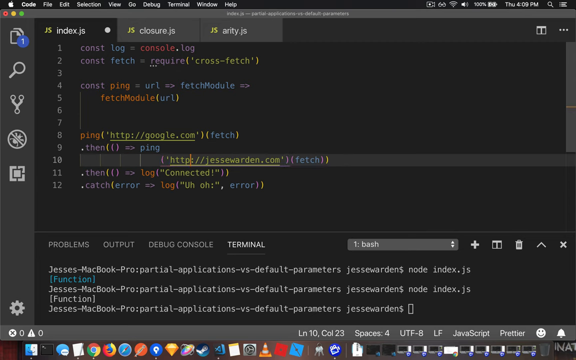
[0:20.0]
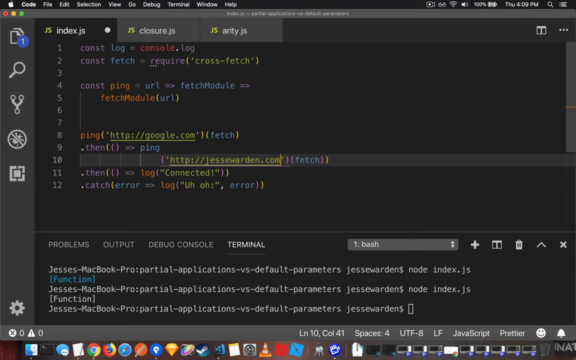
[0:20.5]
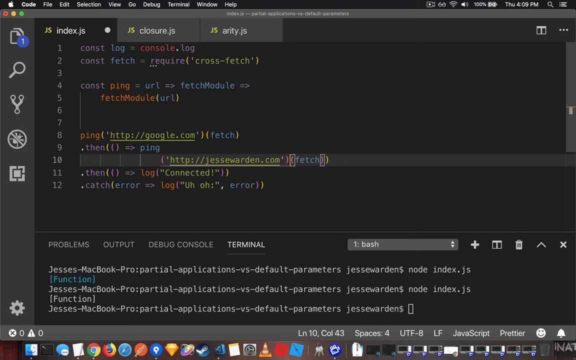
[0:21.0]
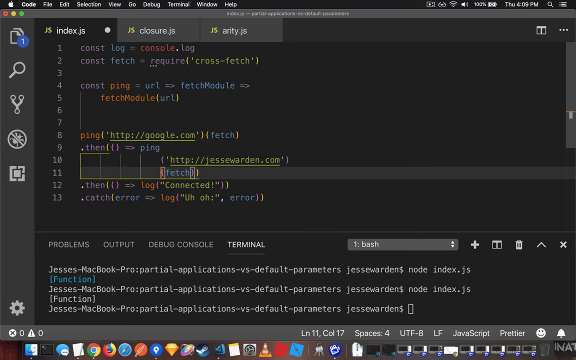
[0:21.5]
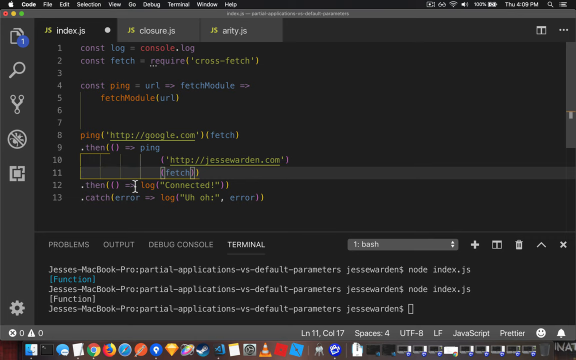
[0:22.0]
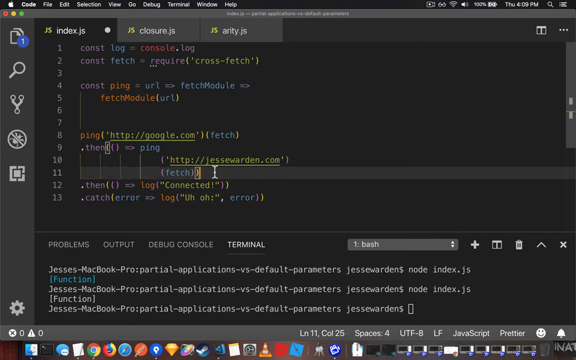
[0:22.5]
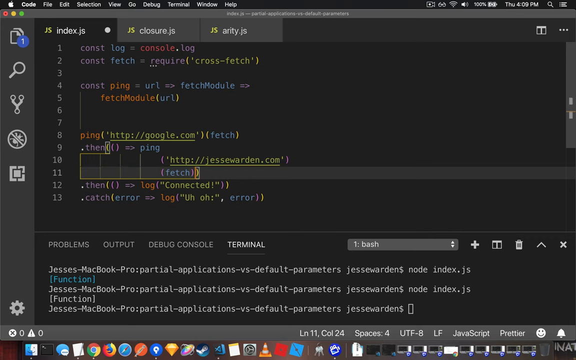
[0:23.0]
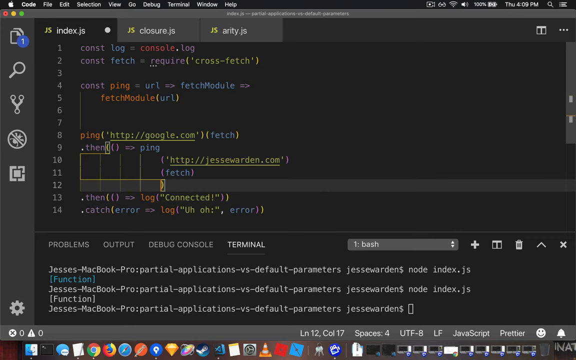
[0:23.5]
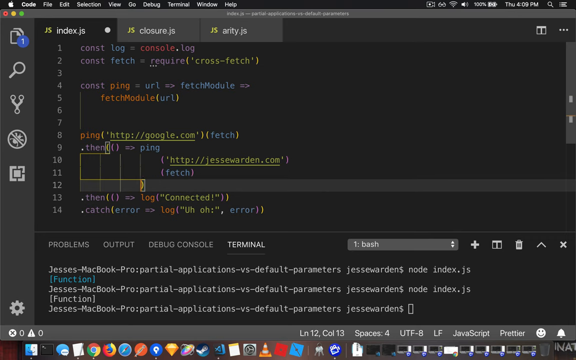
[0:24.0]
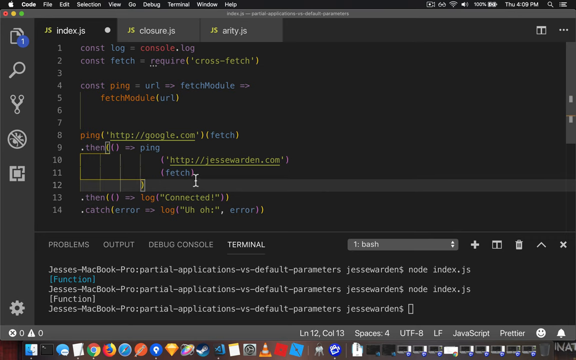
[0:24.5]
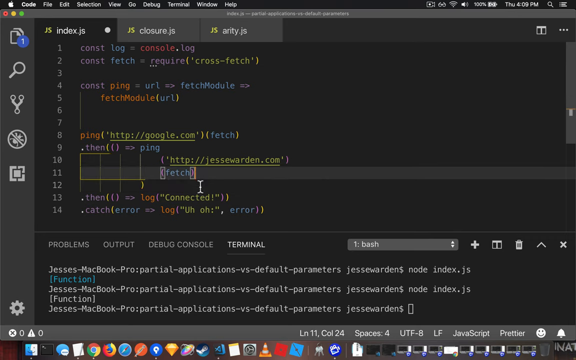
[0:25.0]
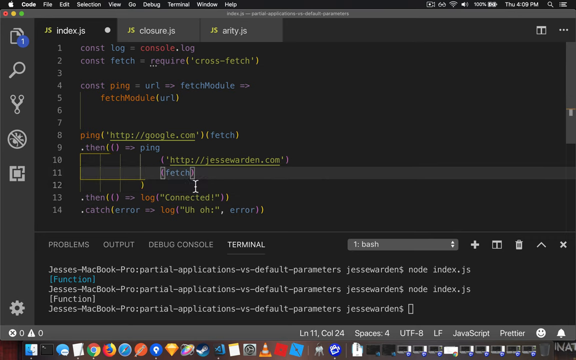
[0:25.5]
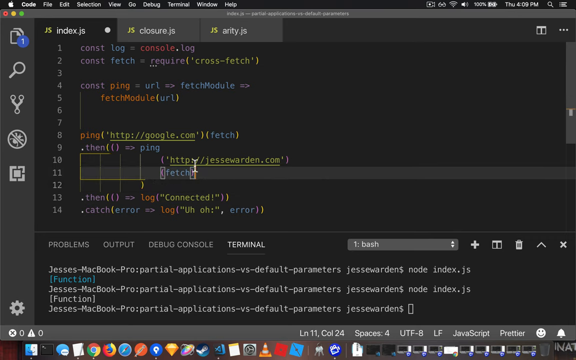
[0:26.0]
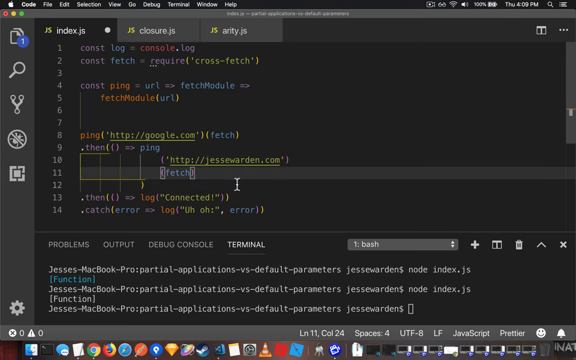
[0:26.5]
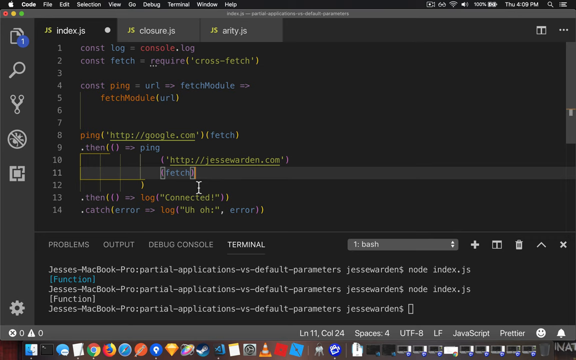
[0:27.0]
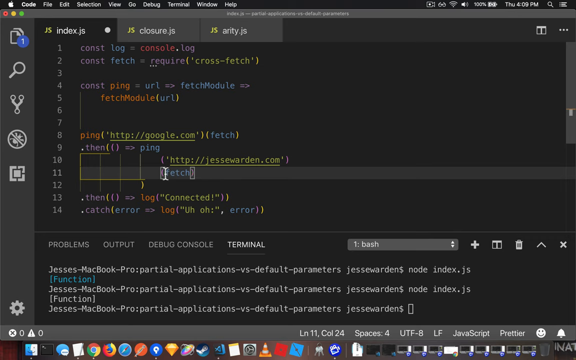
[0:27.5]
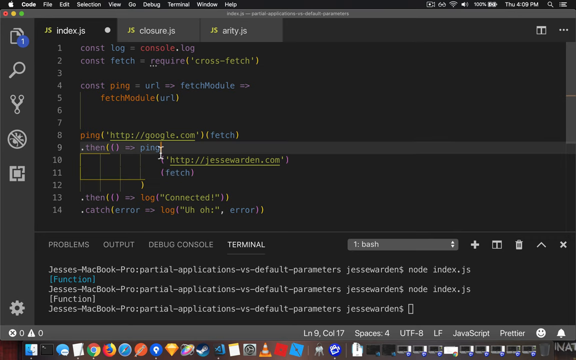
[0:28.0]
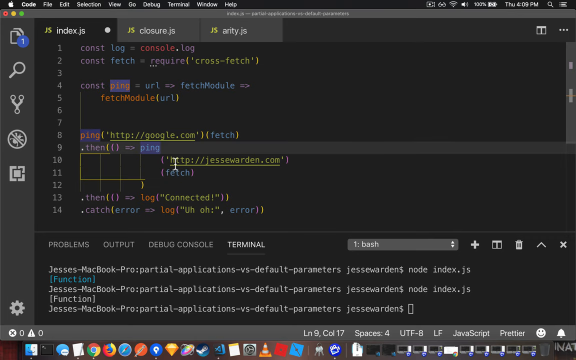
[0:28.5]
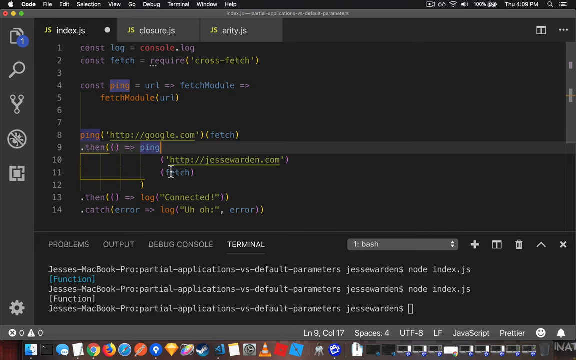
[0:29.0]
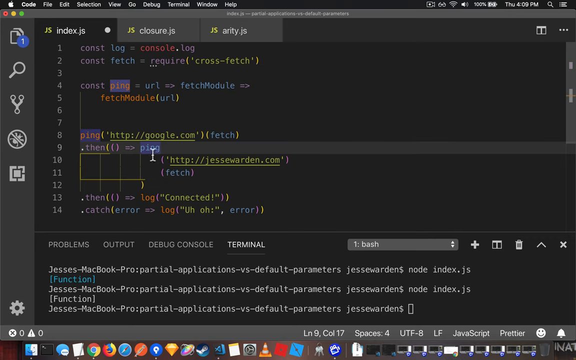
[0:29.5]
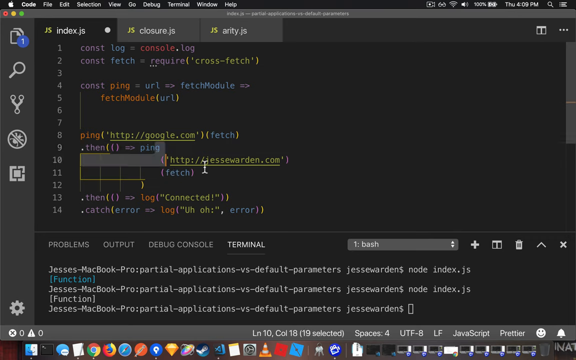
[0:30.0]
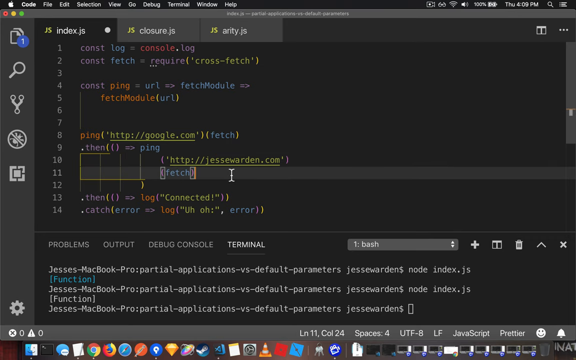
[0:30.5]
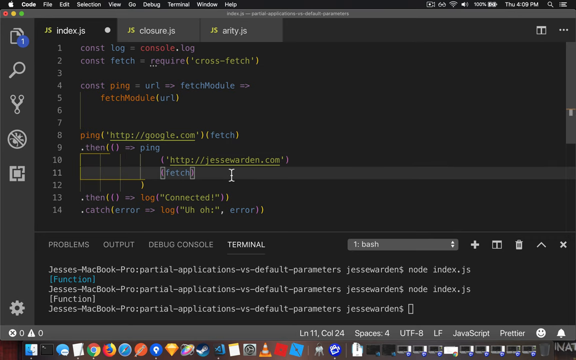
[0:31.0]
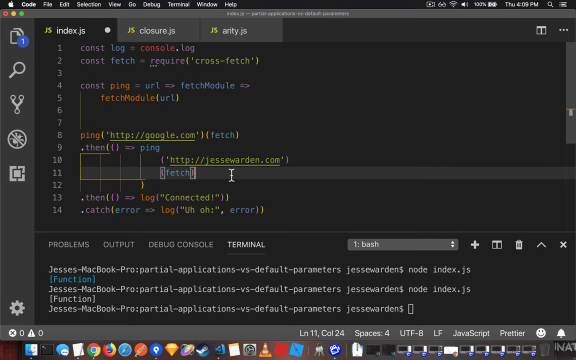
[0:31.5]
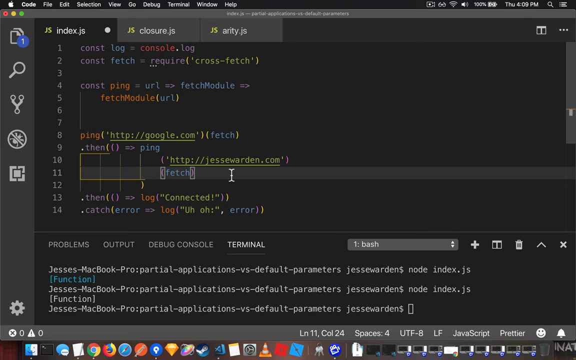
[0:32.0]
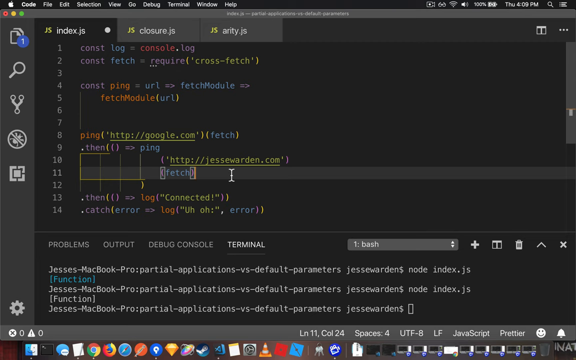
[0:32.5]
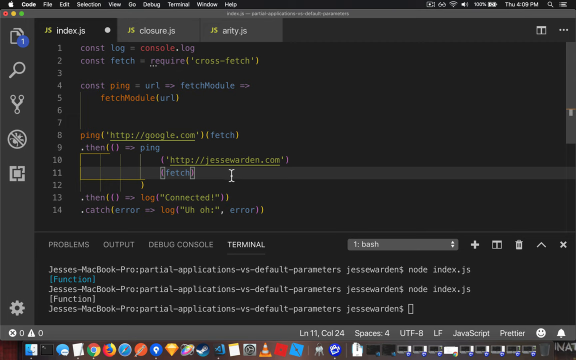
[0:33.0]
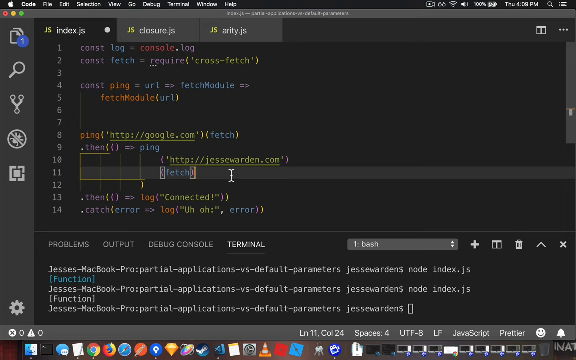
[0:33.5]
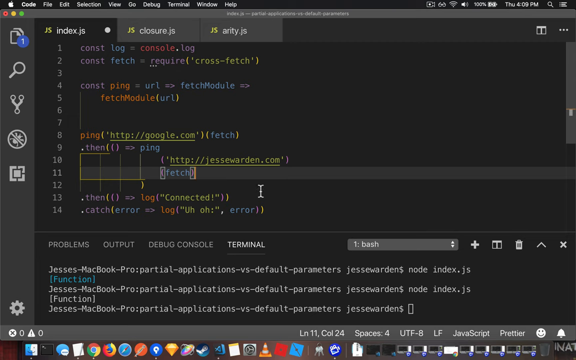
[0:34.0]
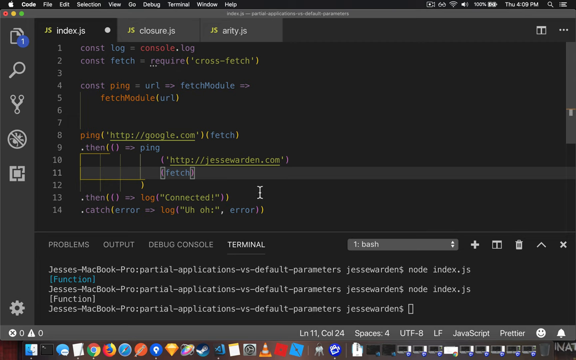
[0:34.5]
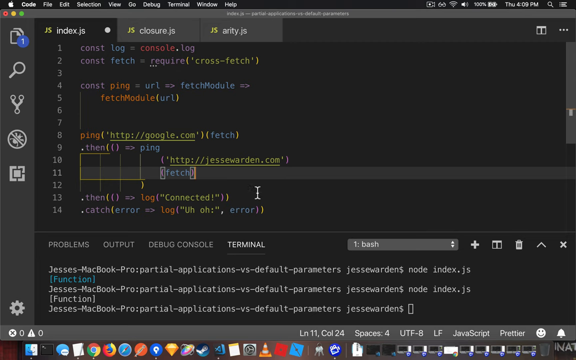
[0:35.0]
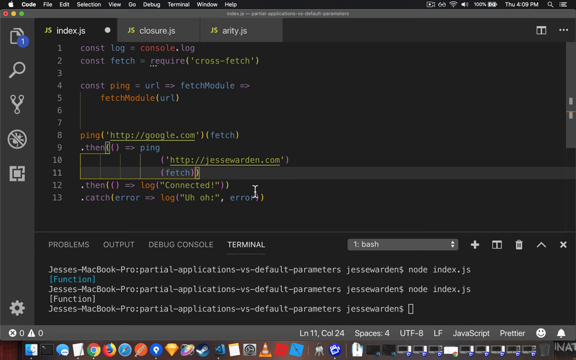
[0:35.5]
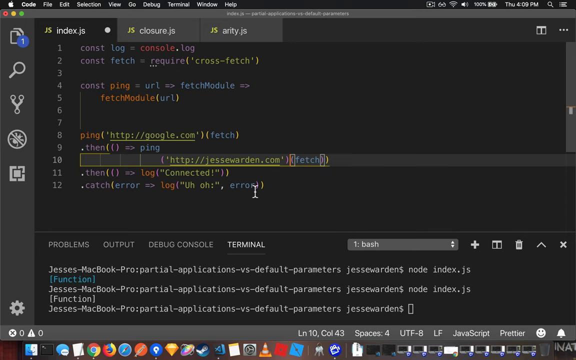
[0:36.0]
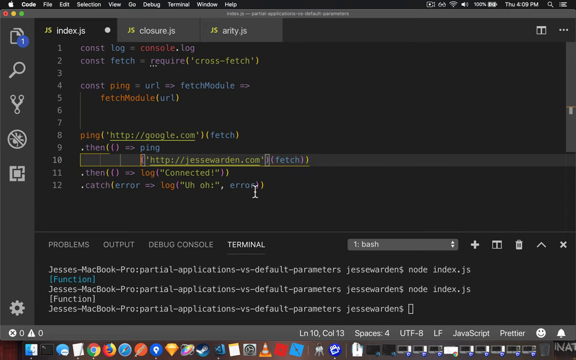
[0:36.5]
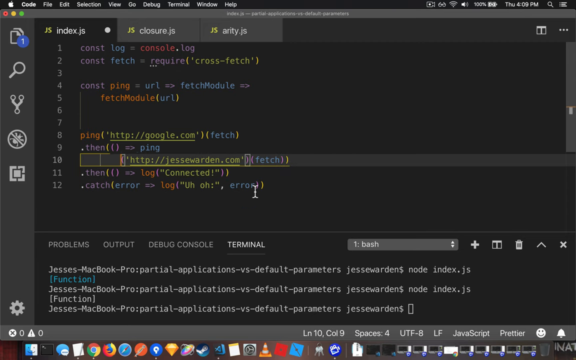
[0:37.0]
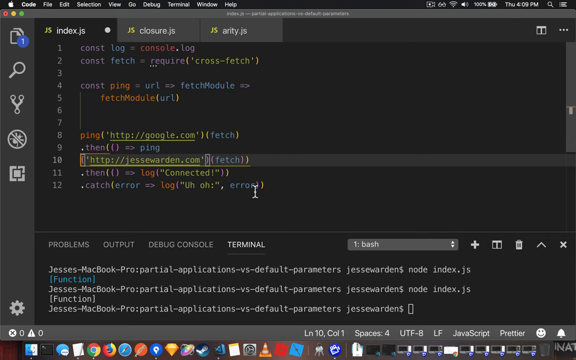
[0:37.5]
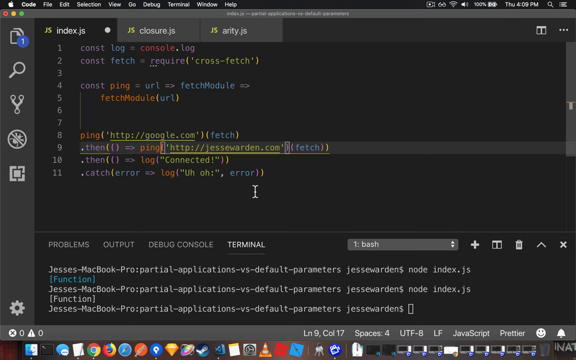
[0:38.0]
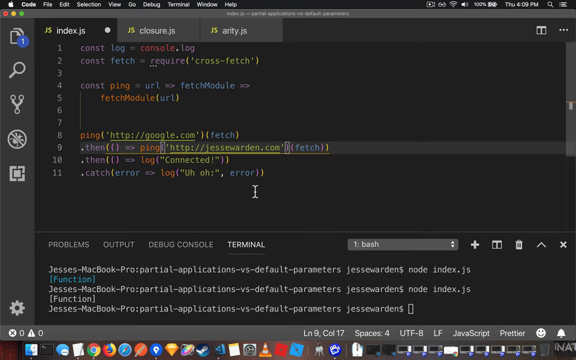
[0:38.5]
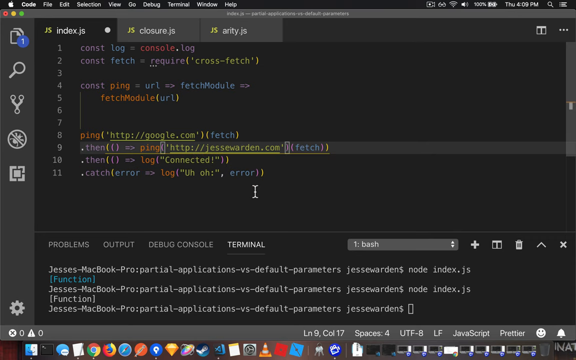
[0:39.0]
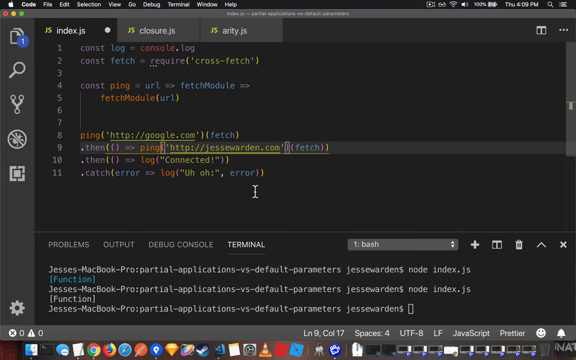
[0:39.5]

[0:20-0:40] A lot of code appears on a white or gray background, with "index.js" at the top, so it is probably JavaScript; an Apple navigation bar at the top suggests it is on an Apple platform. White numbers from 1 through 12 run down the left side, and the currently selected text appears to be "HTTP jessewarden.com." From top to bottom, the code reads "const log equals console.log, const fetch equals require crossfetch, const ping equals URL, fetch module, fetch module URL, ping google.com, fetch then ping jessewarden.com, fetch then log connected, catch error log, uh-oh, error." The code appears to be modified: under HTTP jessewarden.com, enter seems to be pressed at the fetch, creating new lines, so HTTP jessewarden.com is on one line and the next line reads "fetch." Enter is pressed again, making another line with a parenthesis, apparently breaking the line apart. The mouse cursor moves up and down, goes to the ping, and makes a counterclockwise circle around it. It then moves down to the fetch text and clicks on it. Backspace is pressed repeatedly, rejoining everything so that "then ping HTTP jessewarden.com fetch" is all one line again.